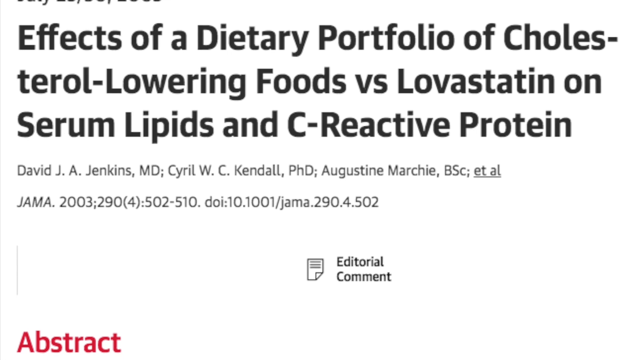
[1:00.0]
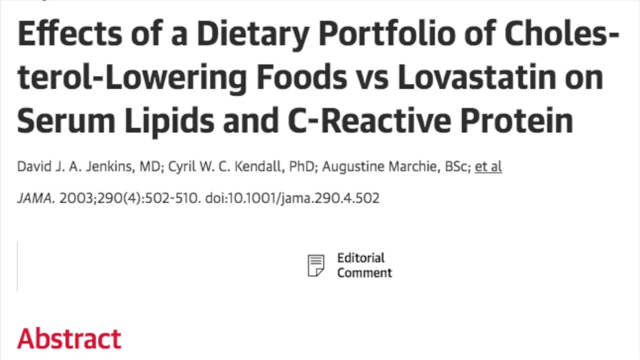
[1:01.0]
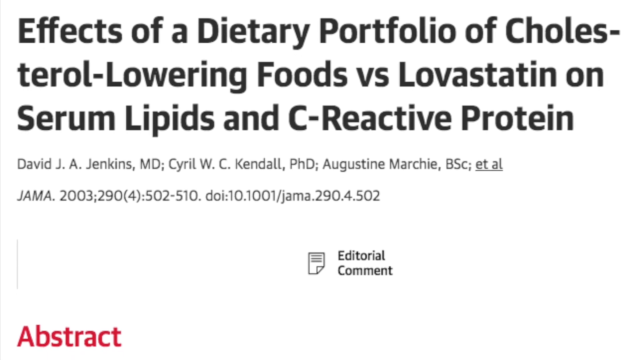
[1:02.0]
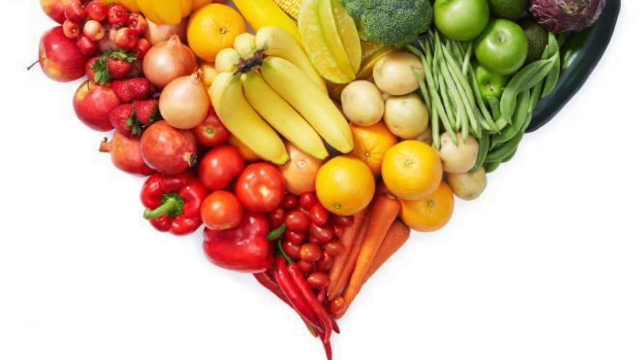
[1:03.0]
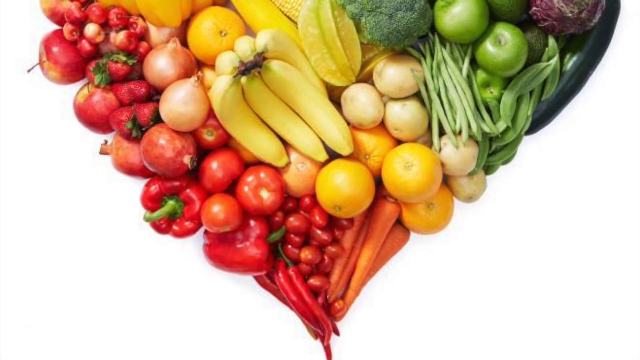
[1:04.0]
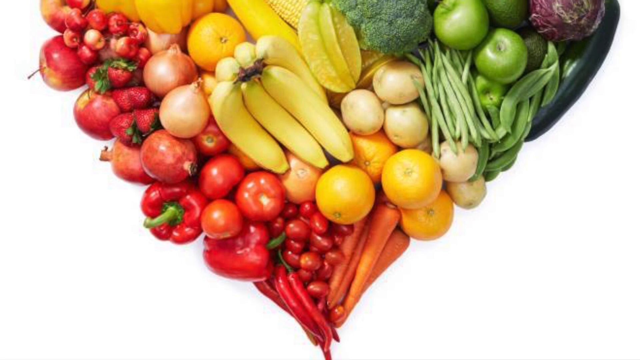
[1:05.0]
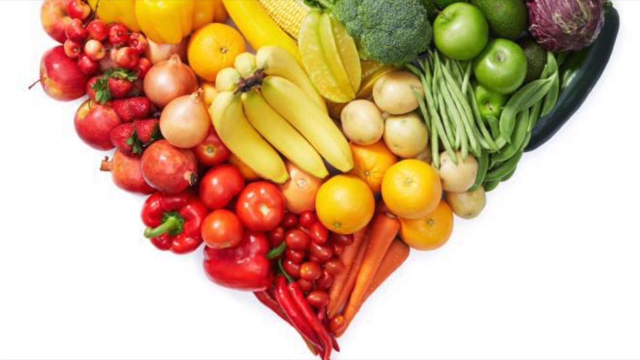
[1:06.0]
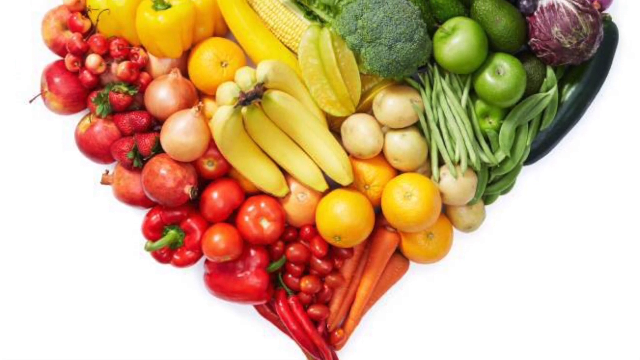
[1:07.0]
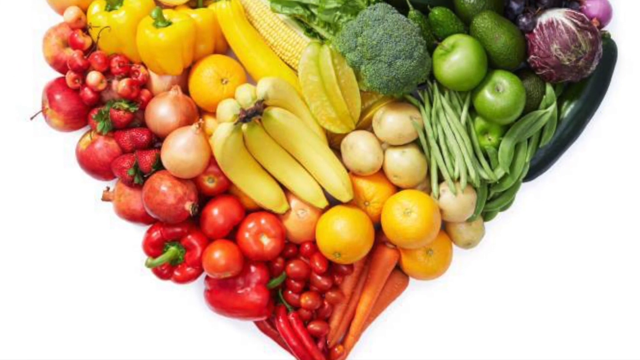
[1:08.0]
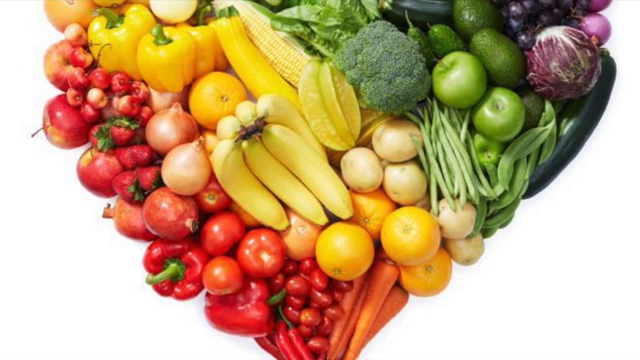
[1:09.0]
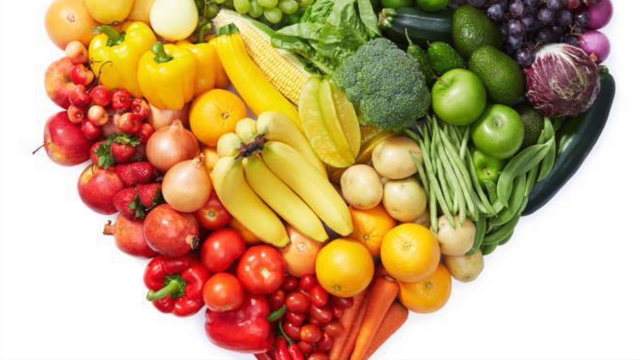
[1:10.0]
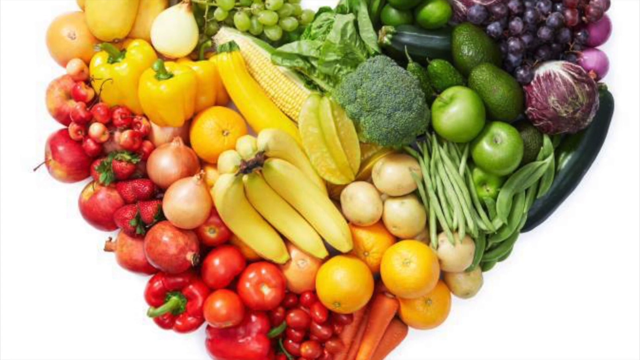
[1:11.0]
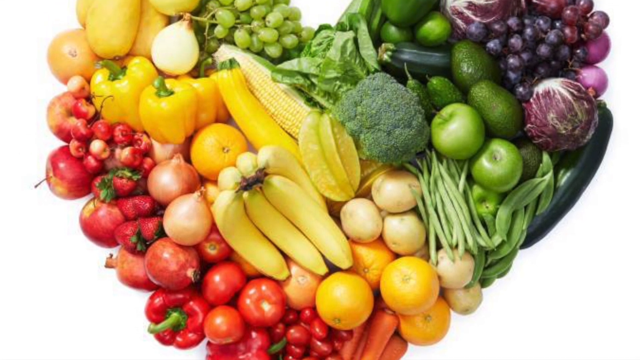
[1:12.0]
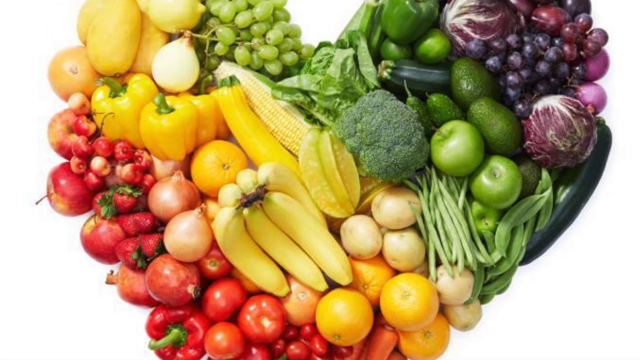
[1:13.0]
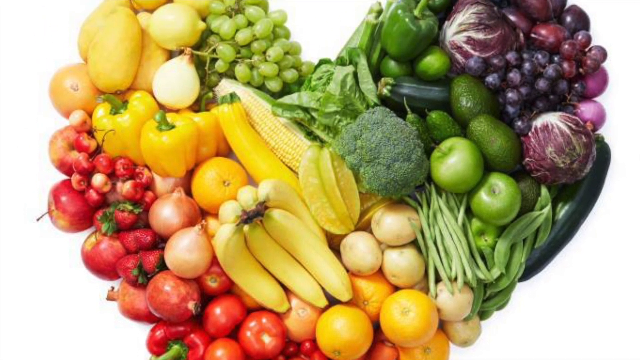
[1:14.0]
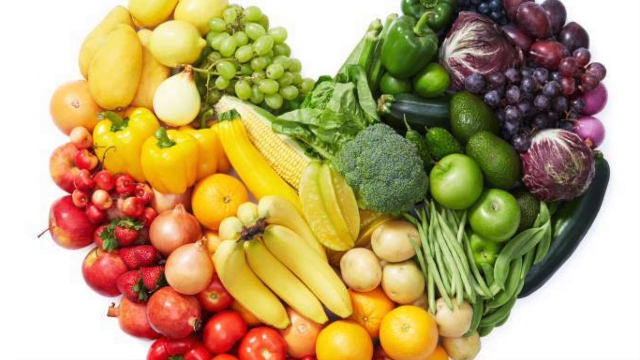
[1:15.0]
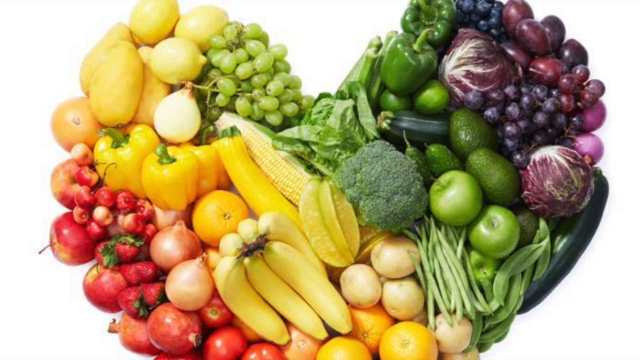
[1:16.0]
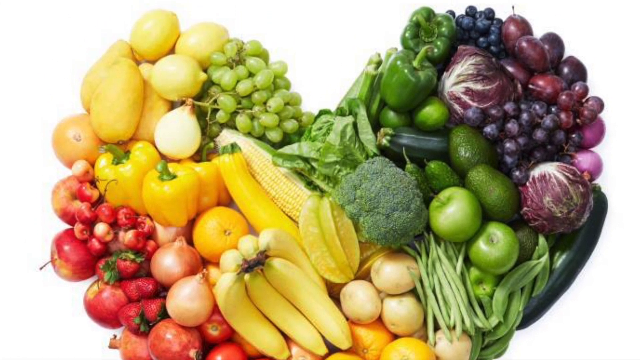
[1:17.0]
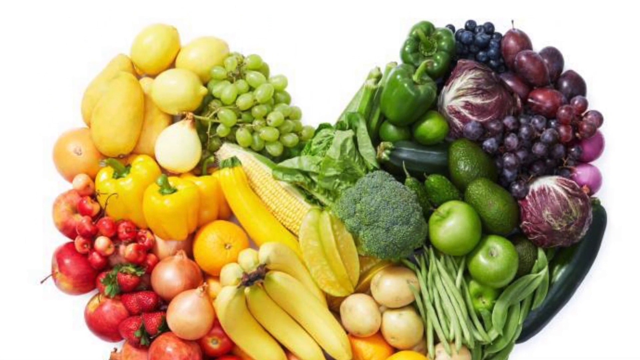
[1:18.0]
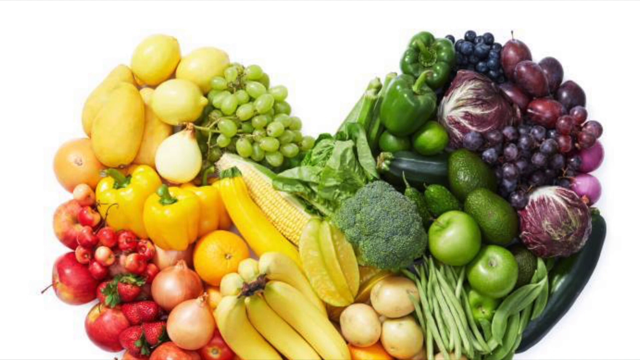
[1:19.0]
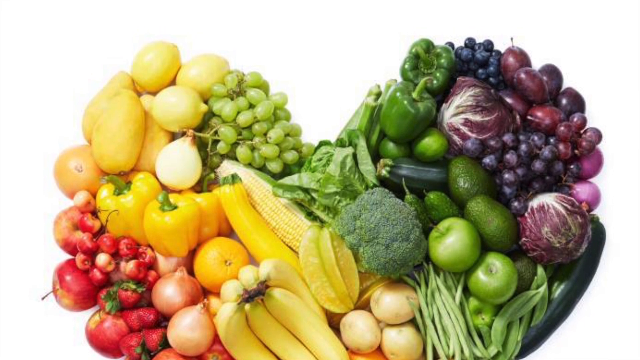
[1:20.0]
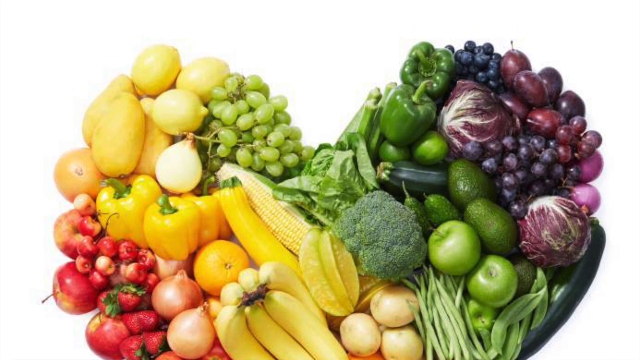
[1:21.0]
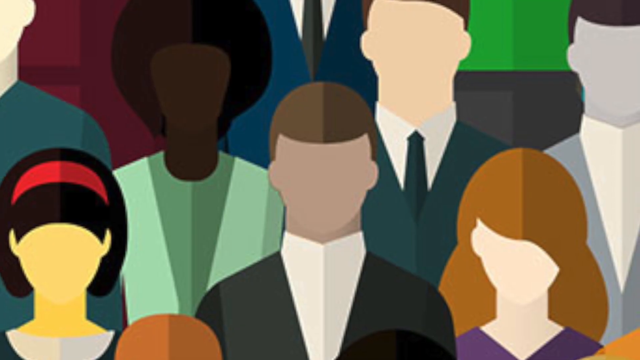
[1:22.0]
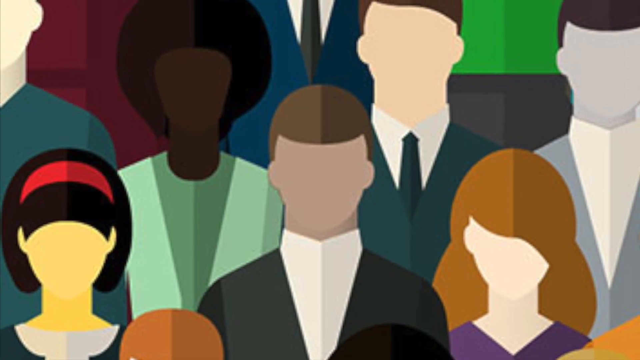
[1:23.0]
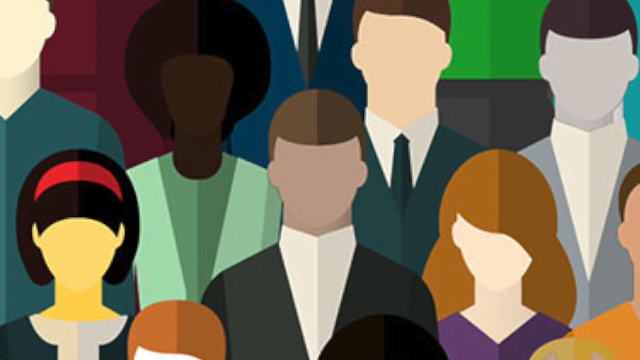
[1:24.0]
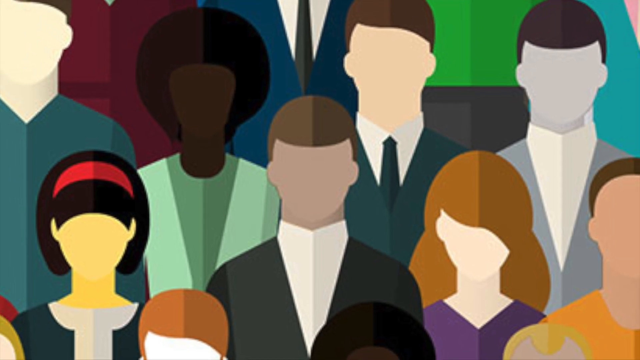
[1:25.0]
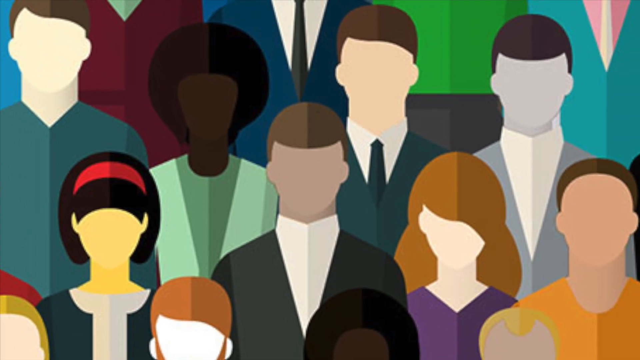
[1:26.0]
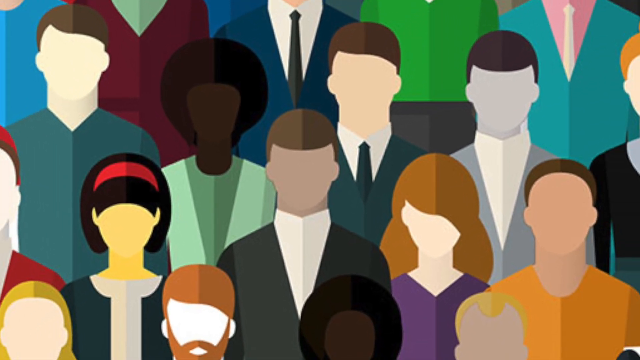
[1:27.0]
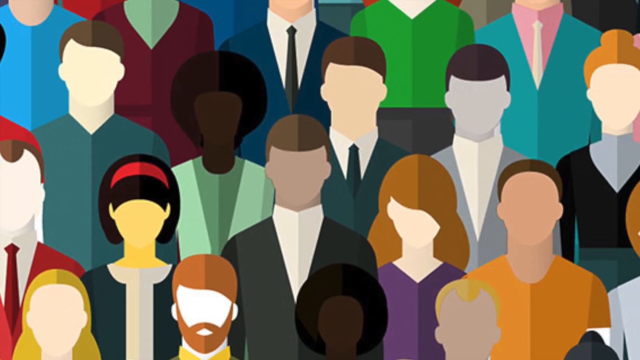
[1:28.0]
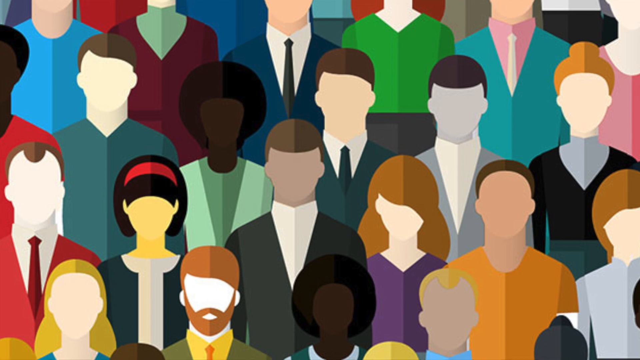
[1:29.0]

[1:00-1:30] The title of a study appears in black text: "Effects of a Dietary Portfolio of Cholesterol-Lowering Foods vs. Lovastatin on Serum Lipids and C-Reactive Protein," with the names of the doctors involved, David Jenkins, Cyril Kendall, and Augustine Marchi, followed by the word "abstract" at the bottom. The screen then changes to a white background, and somewhat of a cornucopia of fruits and vegetables is lowered from the top downward. At the top are yellow peppers, corn, broccoli, green Granny Smith apples, and red cabbage. Below are onions, a bunch of bananas, oranges, turnips, and green beans. At the bottom of this cornucopia-shaped grouping are bunches of carrots and grape tomatoes. The grouping forms the shape of a heart as it is lowered toward the bottom of the screen. Next comes an illustration of people, colorfully done and cartoon-like, in approximately three rows. None of them have facial features. In the lower left is a Caucasian woman with dark hair and a red headband. To her right is a much taller man with brown skin and brown hair, wearing a jacket and a professional white shirt, also with no facial features. In the lower right corner is a Caucasian woman with brunette hair and an oval-shaped face with no features. The camera pulls back to show more of the rows of colorfully illustrated people.